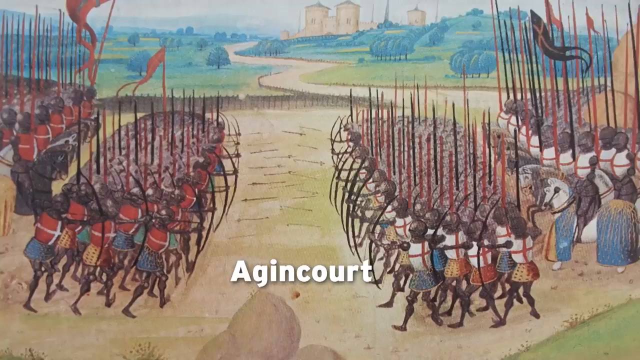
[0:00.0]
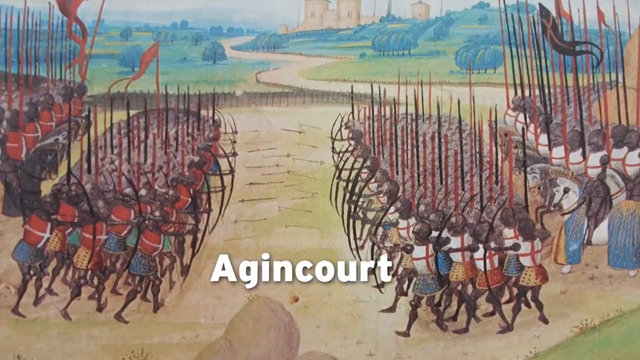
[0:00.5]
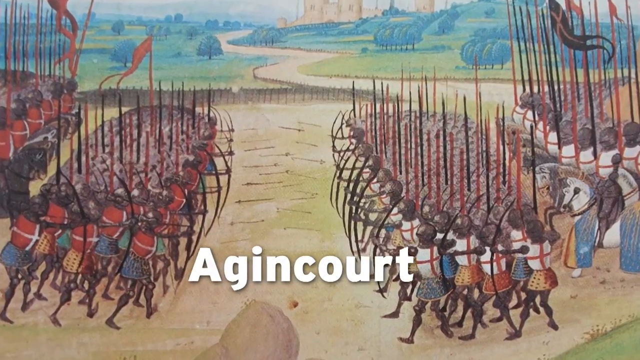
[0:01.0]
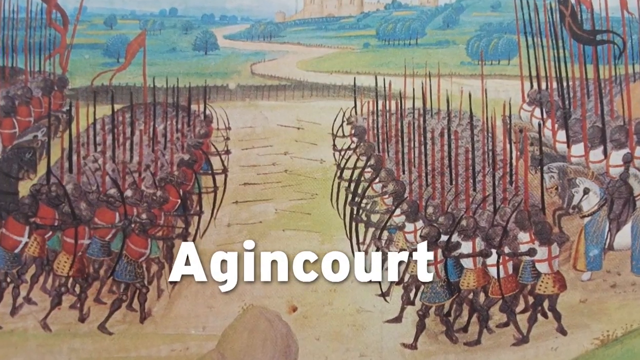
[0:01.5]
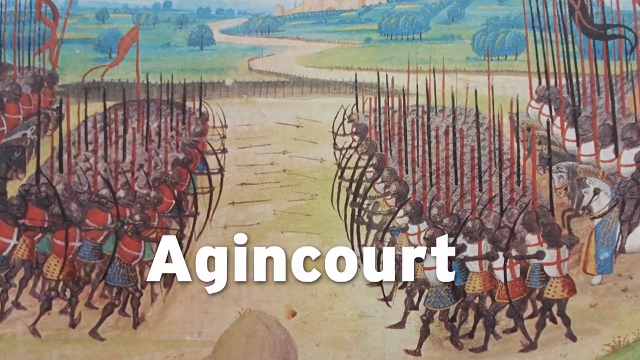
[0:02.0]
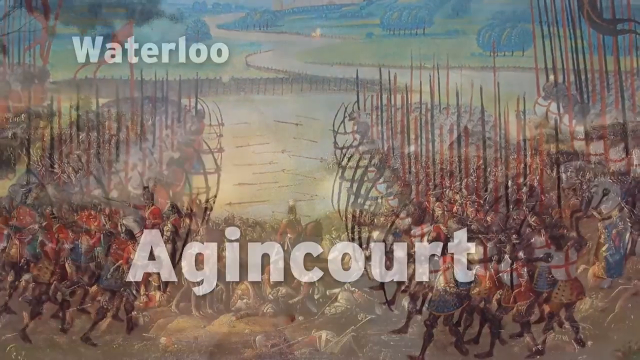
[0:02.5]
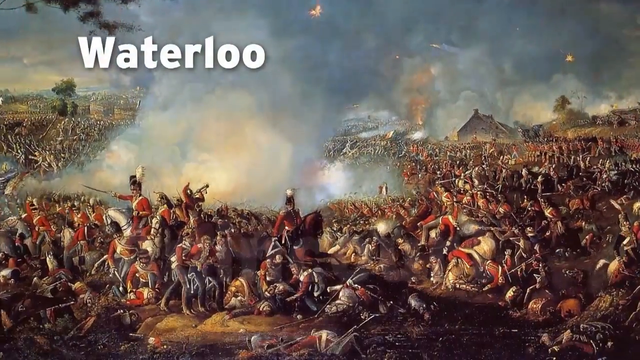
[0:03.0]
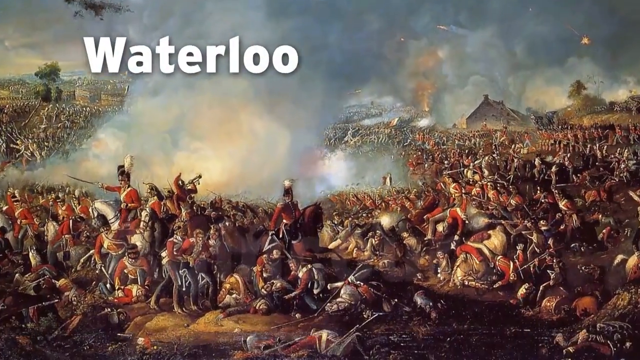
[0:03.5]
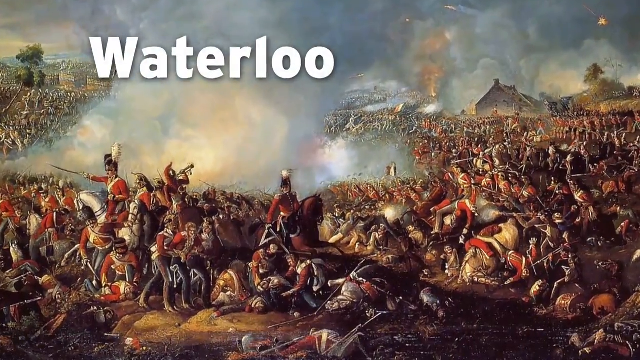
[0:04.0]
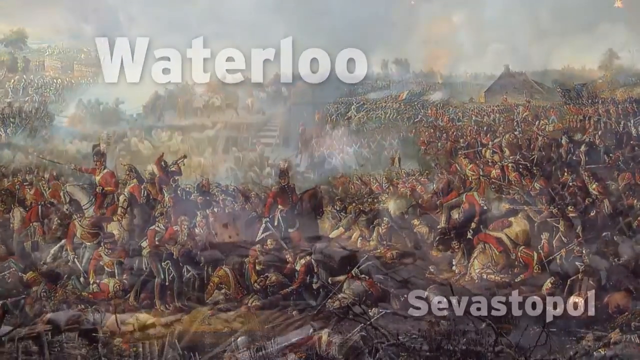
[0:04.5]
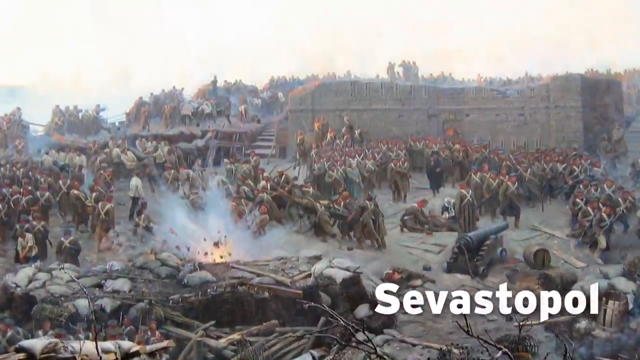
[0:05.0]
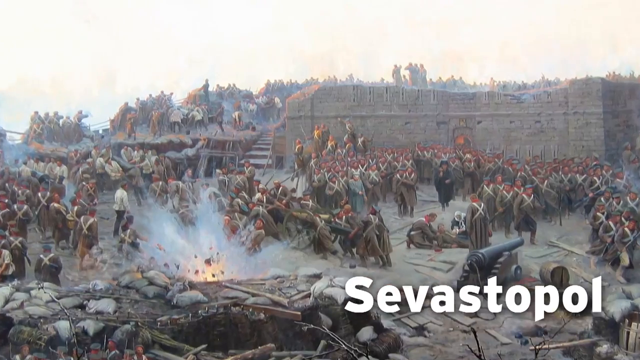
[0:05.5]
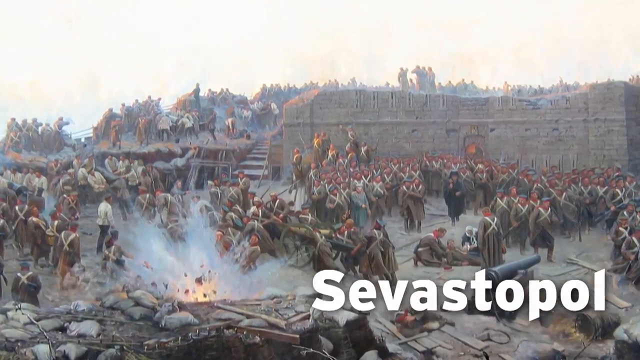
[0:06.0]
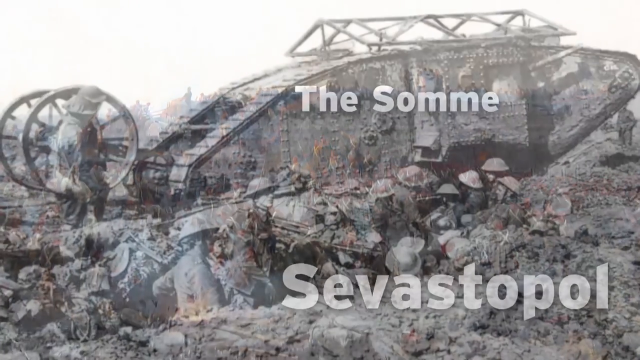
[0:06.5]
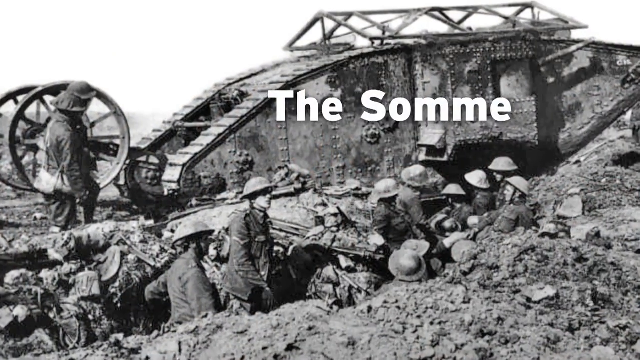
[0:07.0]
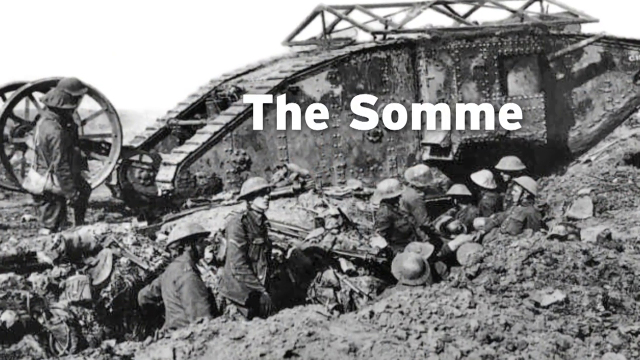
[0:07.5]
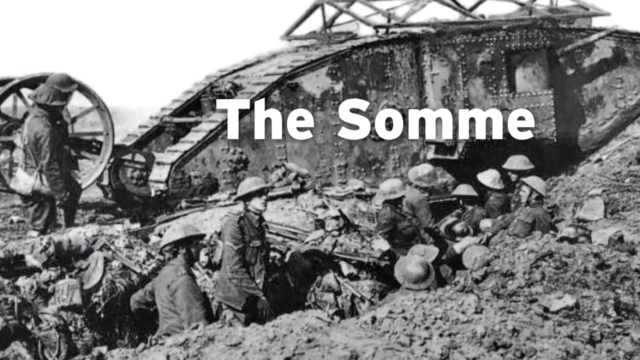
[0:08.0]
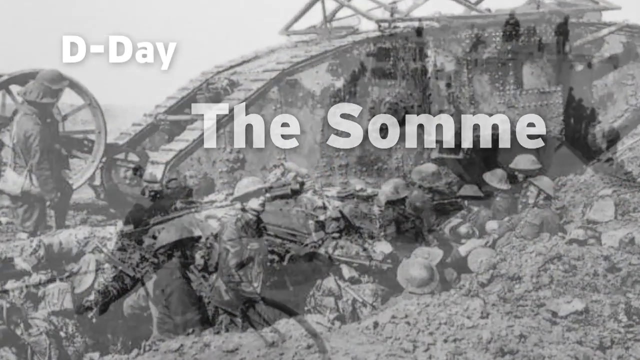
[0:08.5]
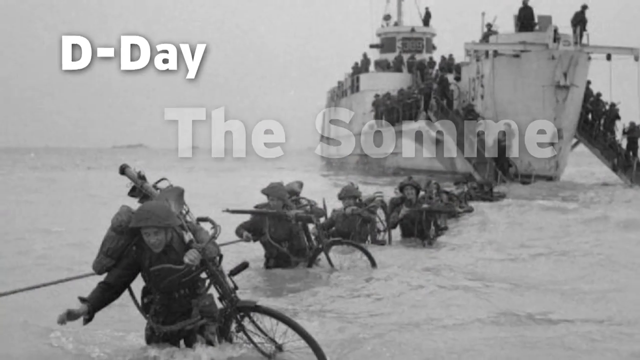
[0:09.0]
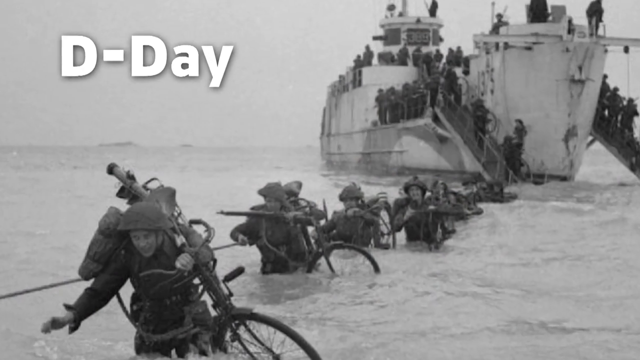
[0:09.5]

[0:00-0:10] The word "Agincourt" appears in large white letters that get bigger and bigger. Then the words "Waterloo", "Sevastopol", "the Somme" and "D-Day" follow, moving across the screen over different depictions of battles or wars. Some of the depictions are paintings and some are black and white photographs. All of them show men fighting against one another with a variety of weapons, and colors such as red, green, yellow and blue are visible.